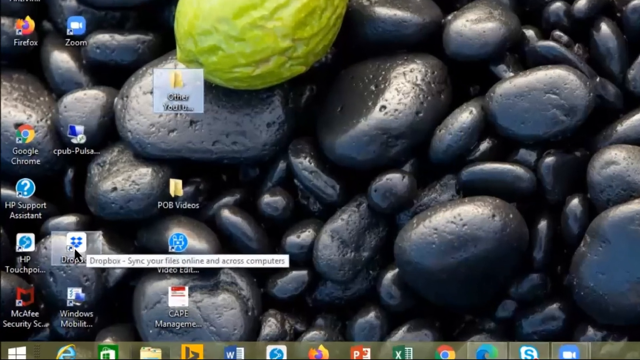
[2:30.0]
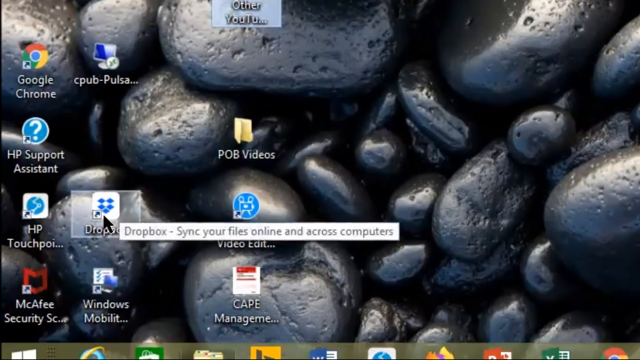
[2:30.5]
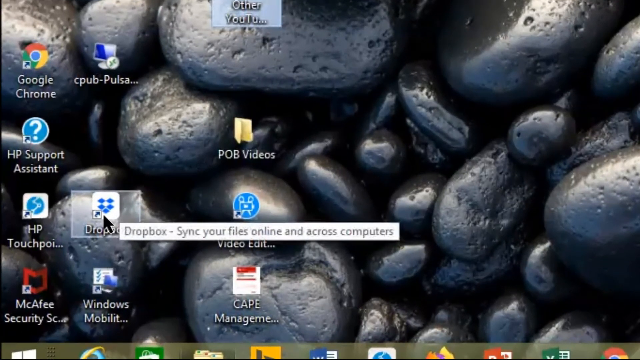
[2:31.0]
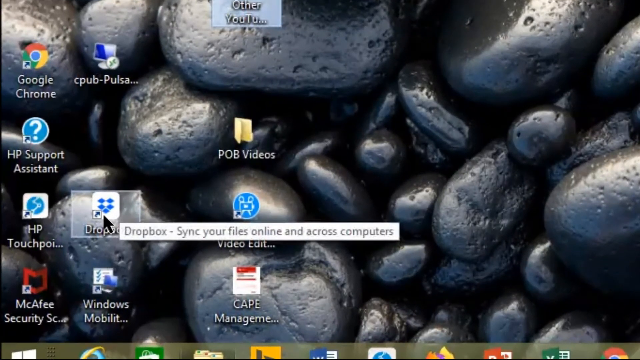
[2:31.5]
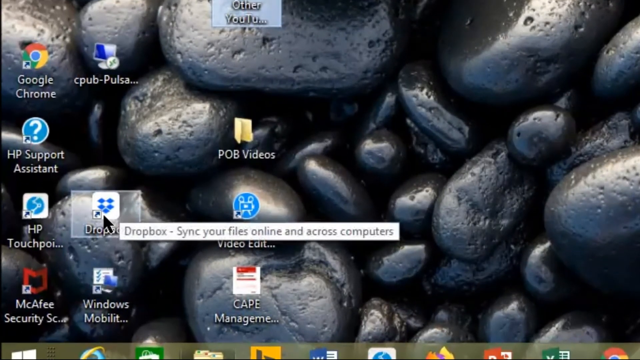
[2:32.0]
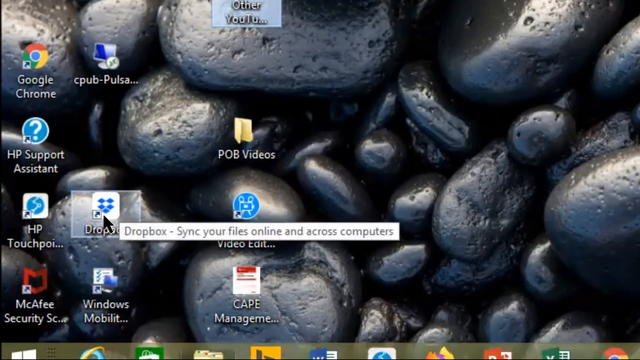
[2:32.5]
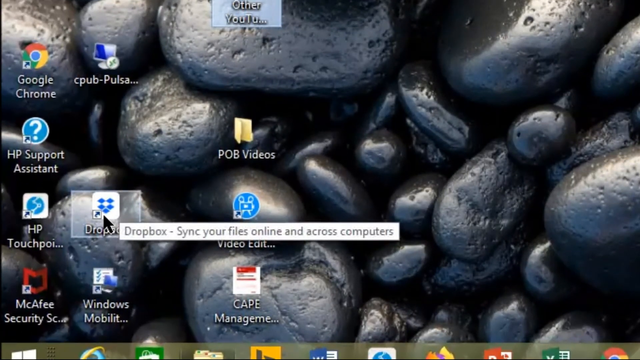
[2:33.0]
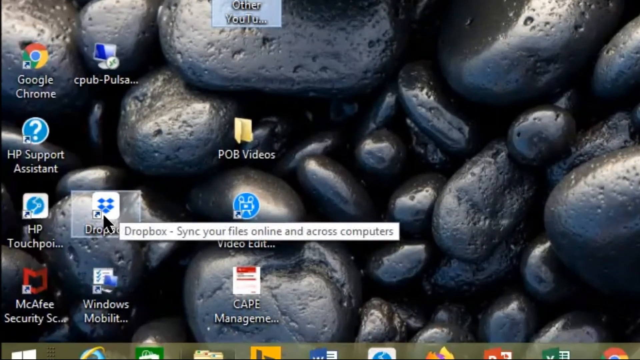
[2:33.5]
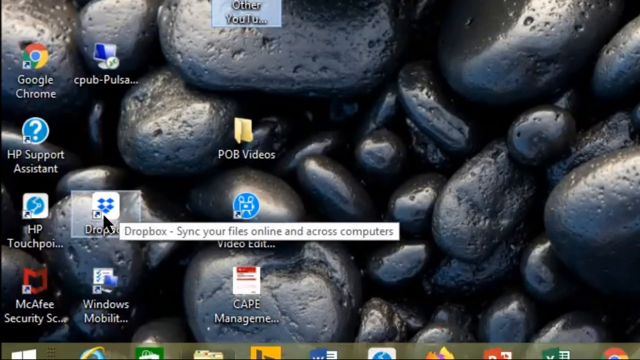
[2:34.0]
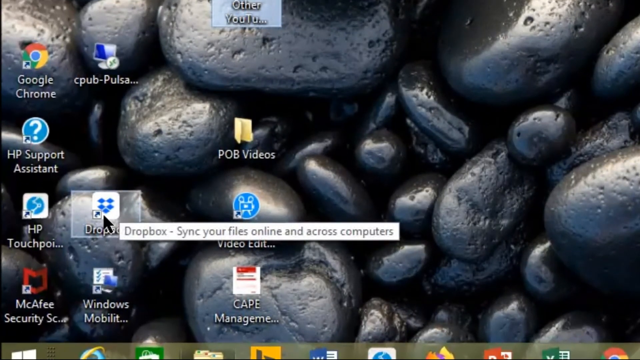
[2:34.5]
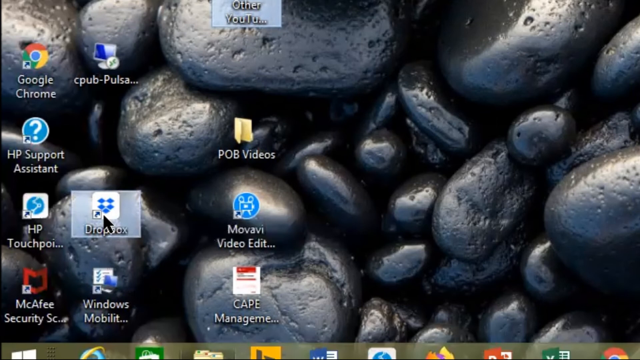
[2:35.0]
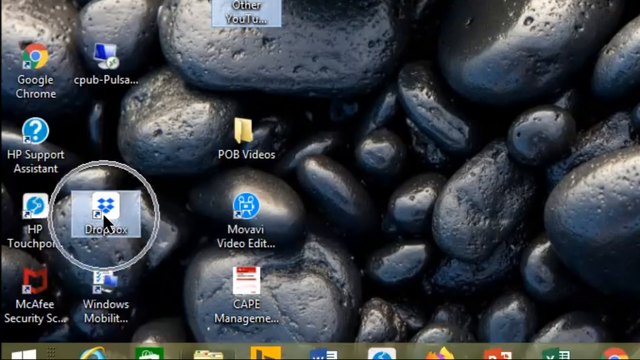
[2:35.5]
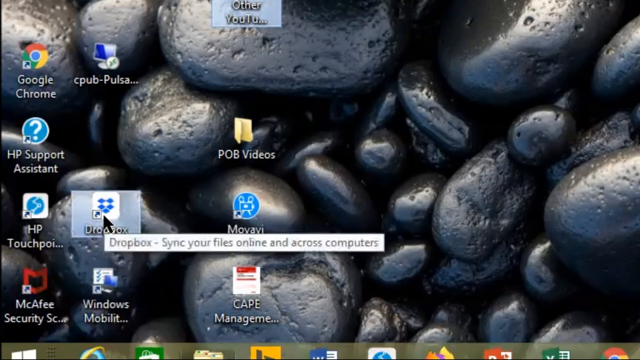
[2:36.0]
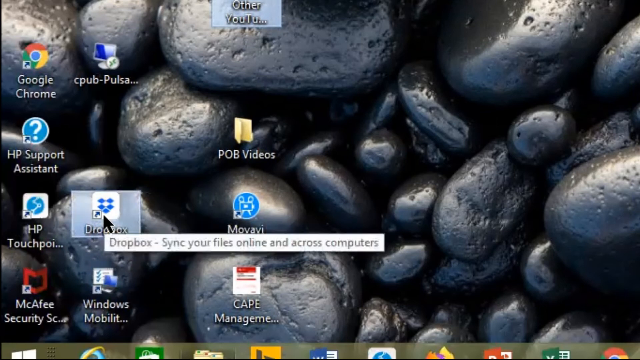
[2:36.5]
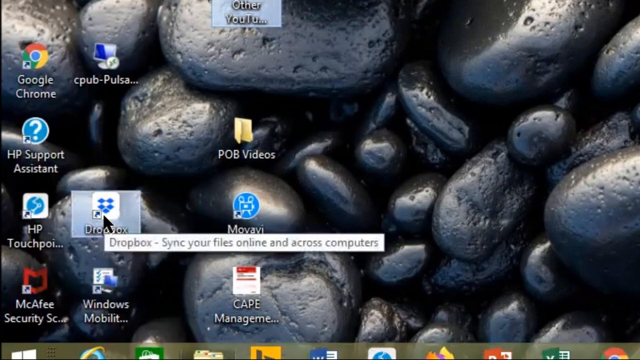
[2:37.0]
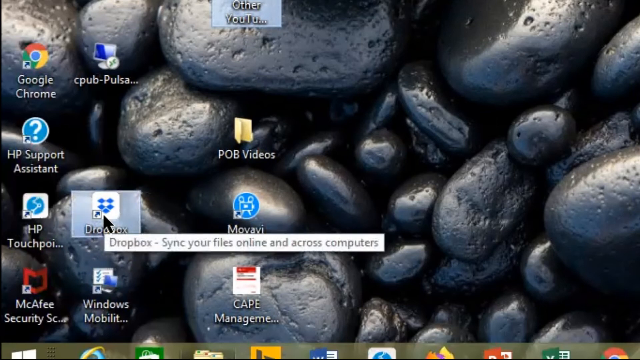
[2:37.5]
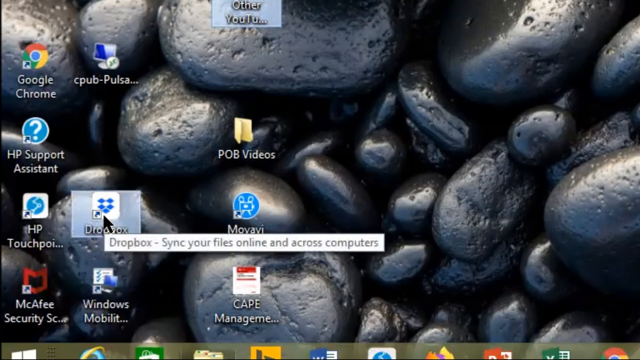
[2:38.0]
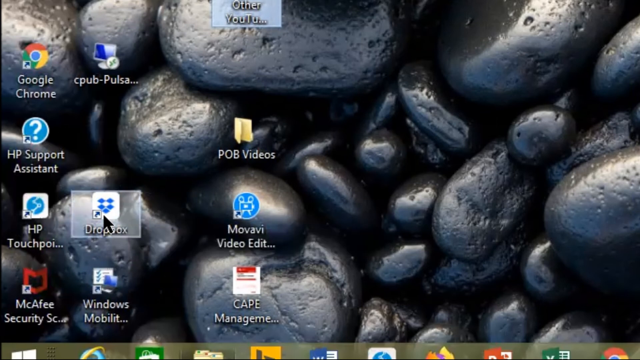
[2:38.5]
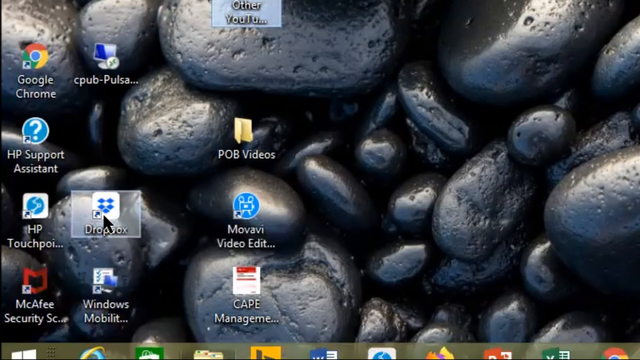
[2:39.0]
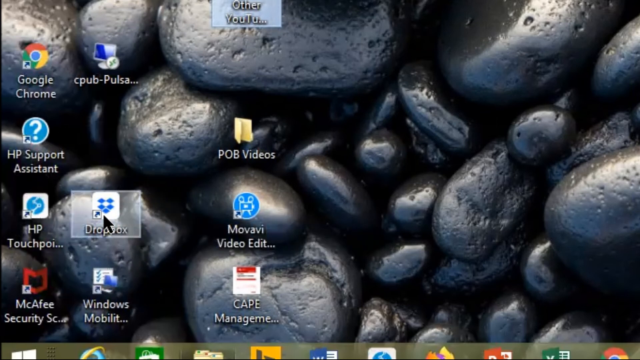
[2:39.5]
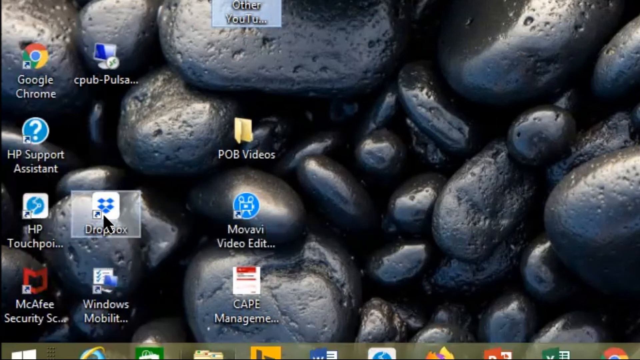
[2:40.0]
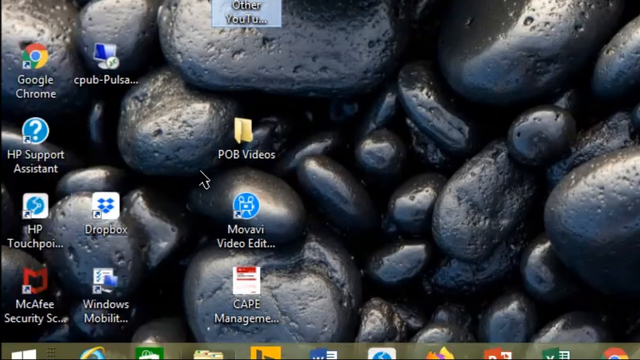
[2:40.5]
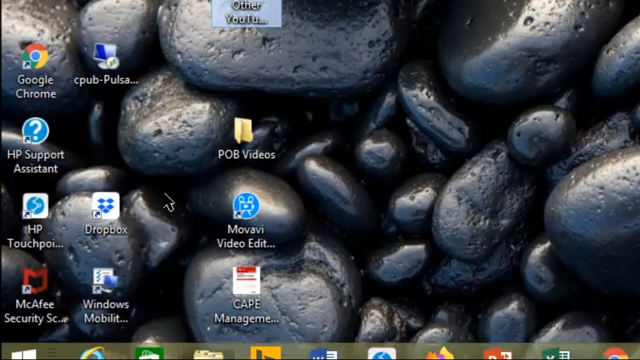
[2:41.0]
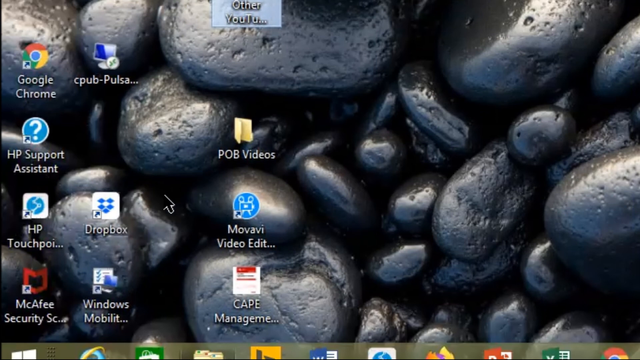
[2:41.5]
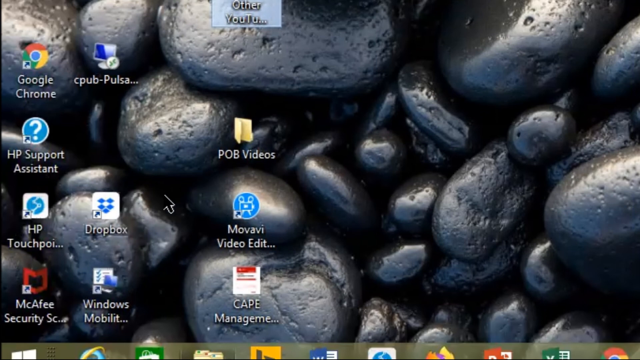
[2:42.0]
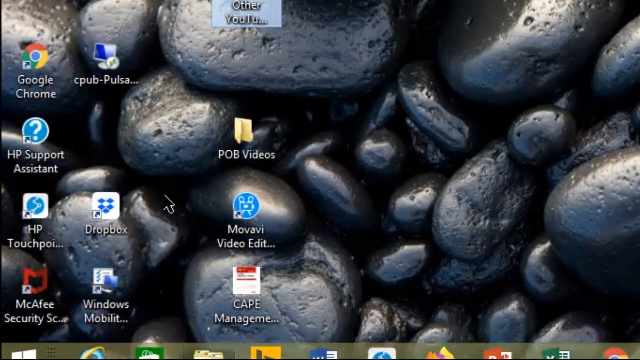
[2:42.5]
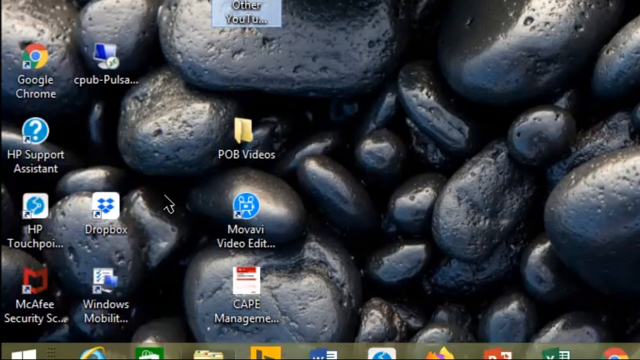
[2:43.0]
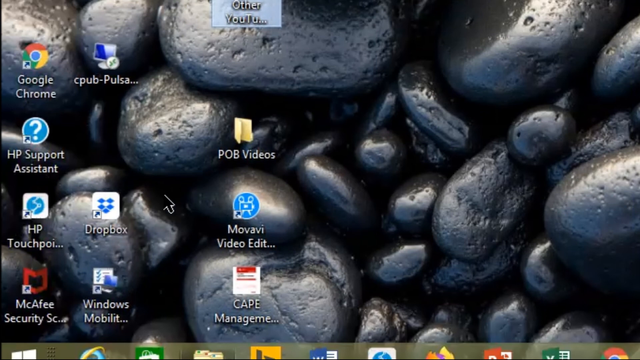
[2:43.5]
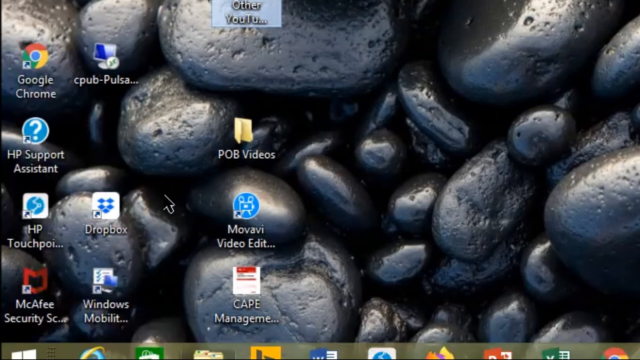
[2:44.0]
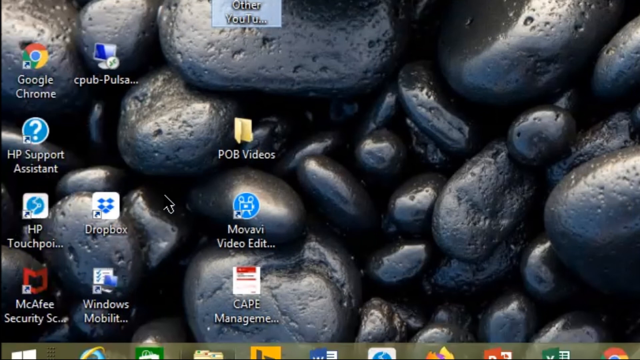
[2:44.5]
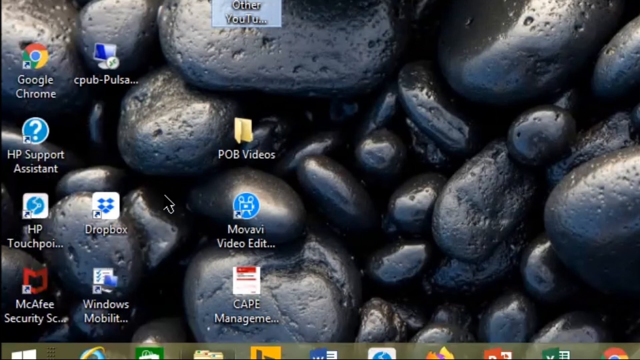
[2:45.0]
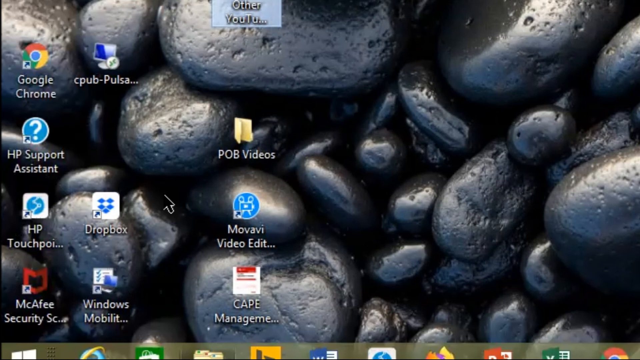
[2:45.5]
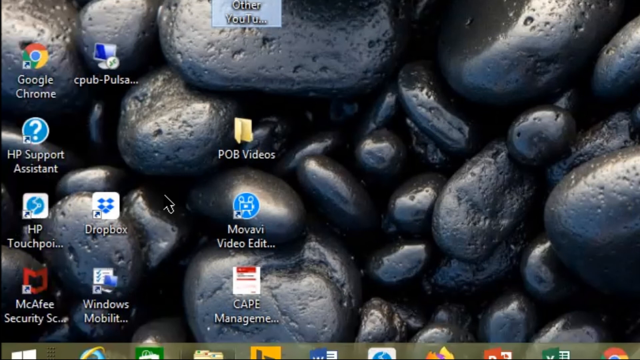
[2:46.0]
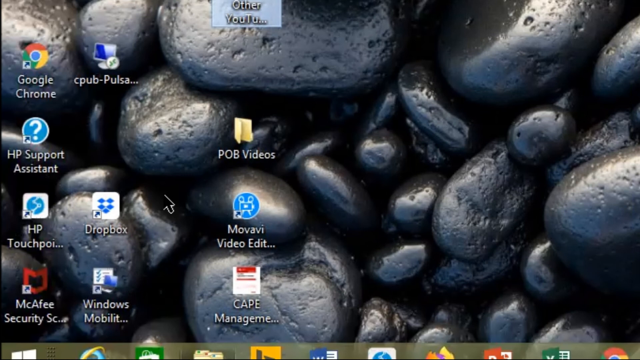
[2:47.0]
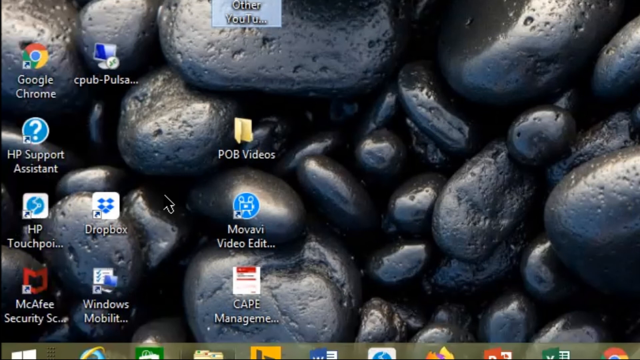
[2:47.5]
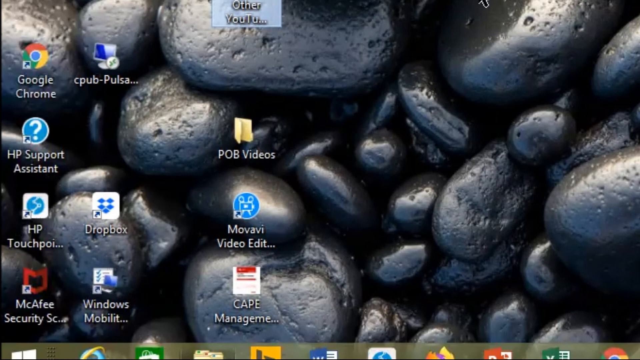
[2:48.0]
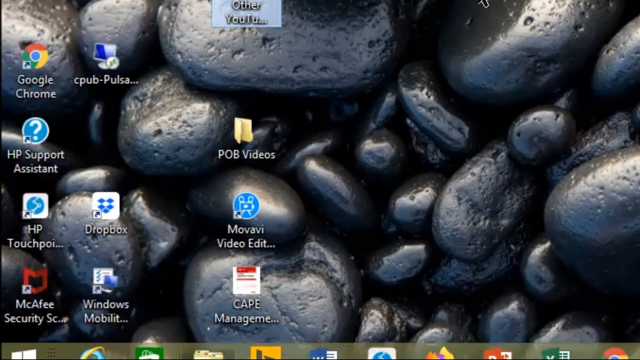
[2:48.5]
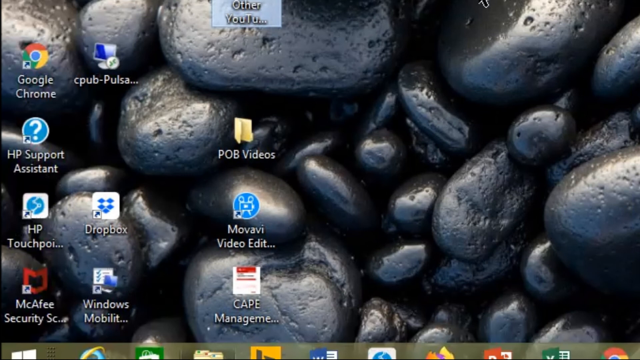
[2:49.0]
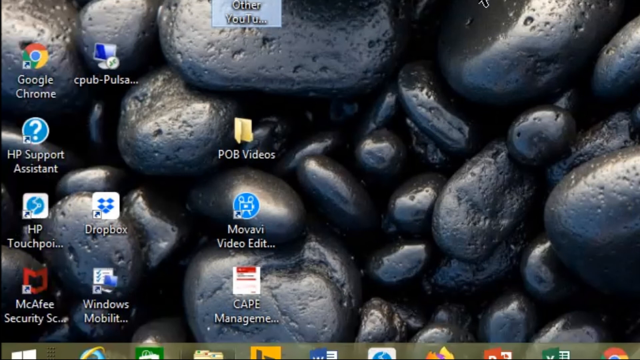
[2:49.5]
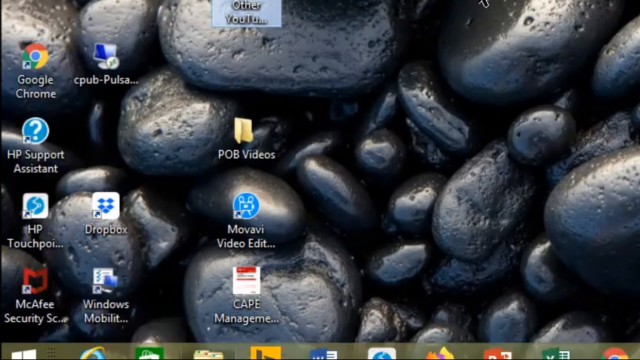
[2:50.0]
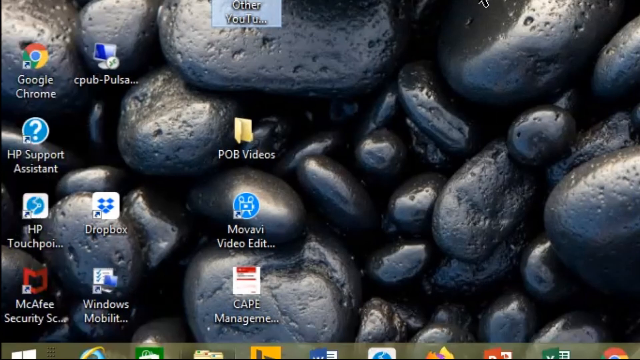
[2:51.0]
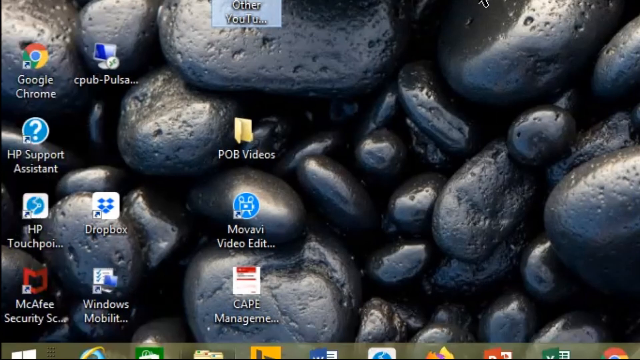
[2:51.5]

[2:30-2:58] The view zooms in on the Dropbox file. The mouse is pointed over it, a gray box highlights it, and the text reads "Dropbox, sync your files online and across computers". The mouse stays on it, and big circles come in to highlight it. The zoom also reveals a McAfee icon, a Windows Mobility icon, and a bunch of new icons along the bottom. The mouse then moves off, the gray box goes away, and the cursor seems to disappear, though it is hard to tell because there is a lot of black. The screen goes completely black and stays that way for probably about six seconds until the video ends.